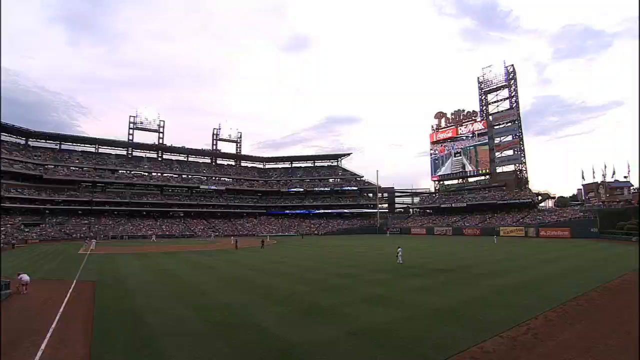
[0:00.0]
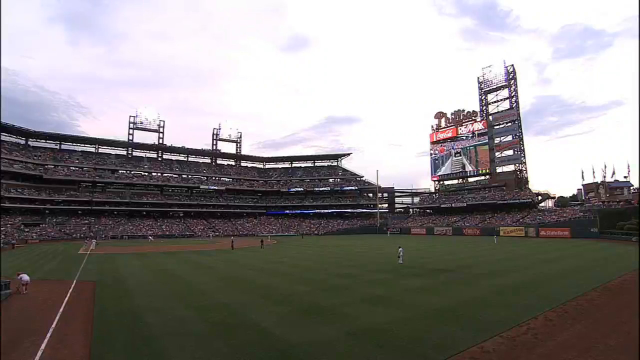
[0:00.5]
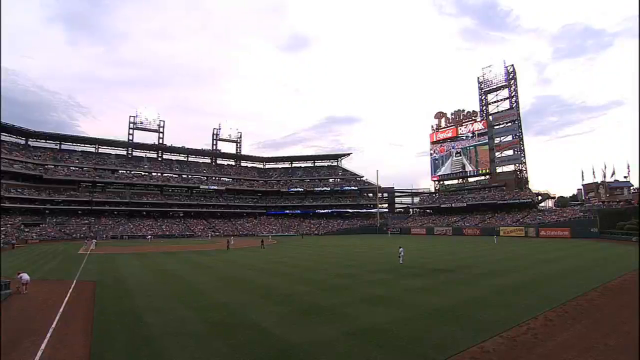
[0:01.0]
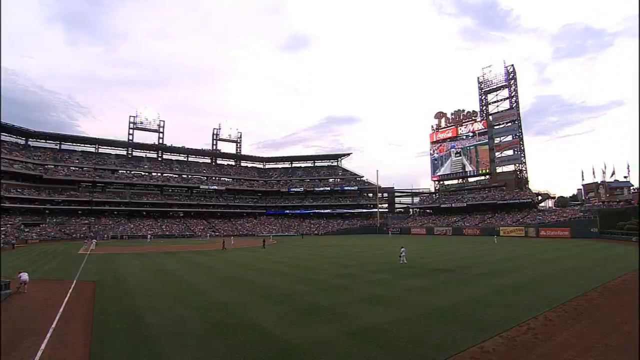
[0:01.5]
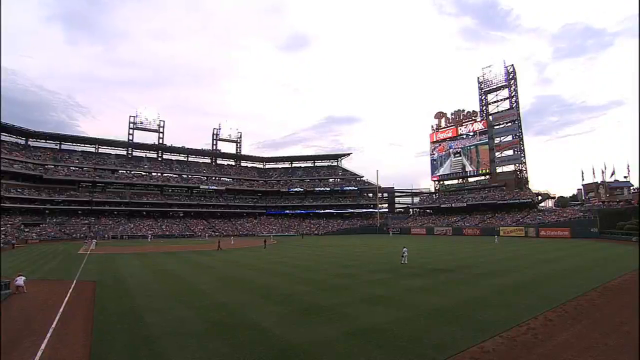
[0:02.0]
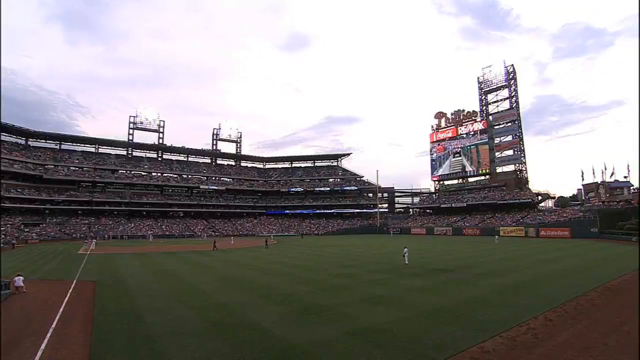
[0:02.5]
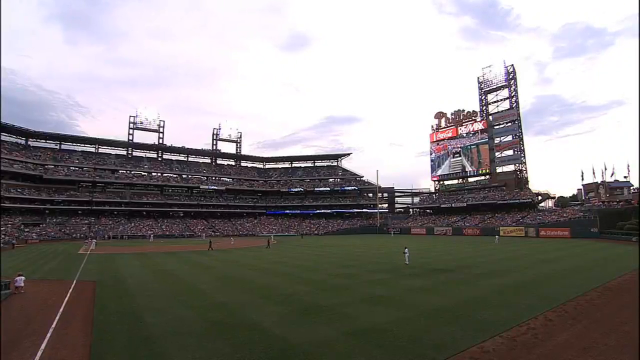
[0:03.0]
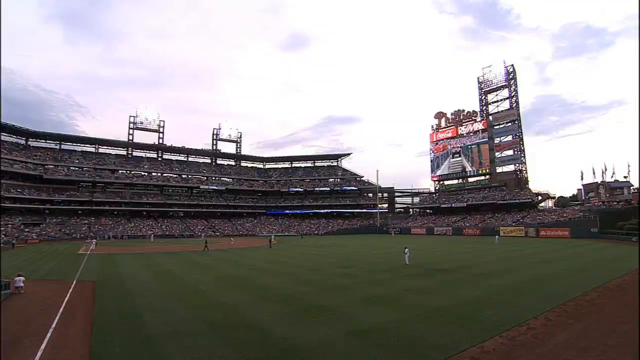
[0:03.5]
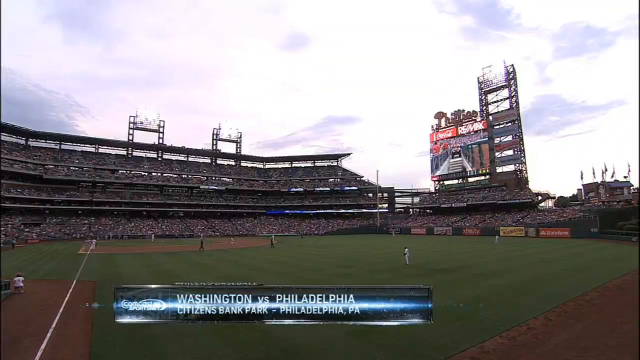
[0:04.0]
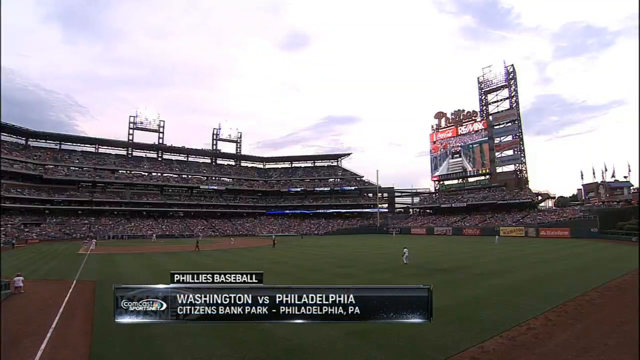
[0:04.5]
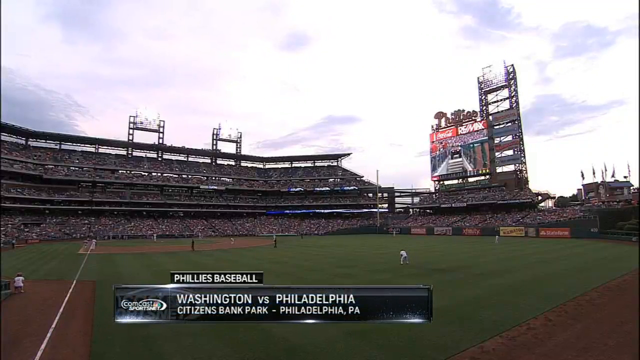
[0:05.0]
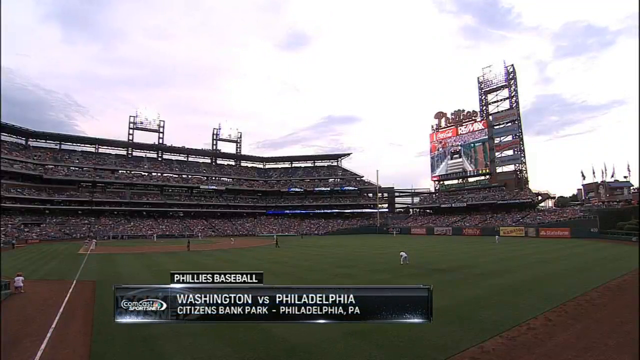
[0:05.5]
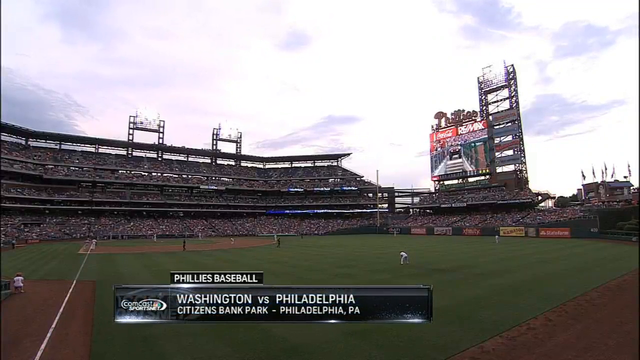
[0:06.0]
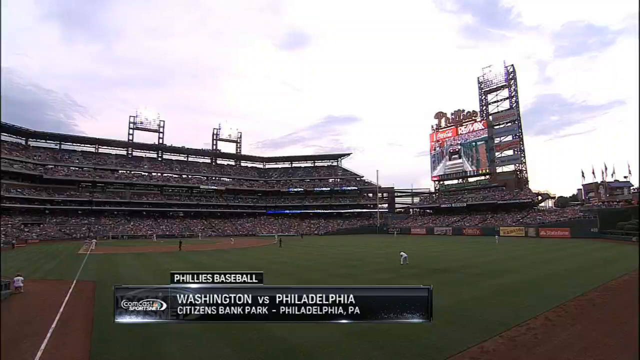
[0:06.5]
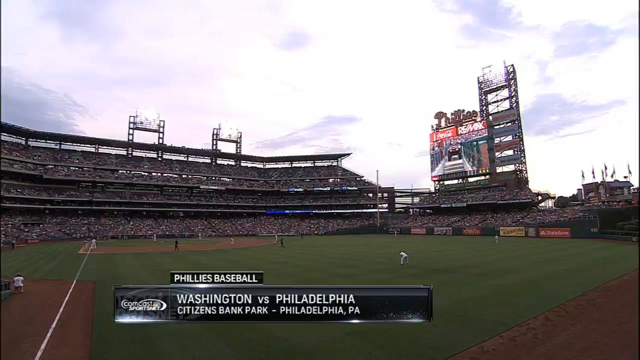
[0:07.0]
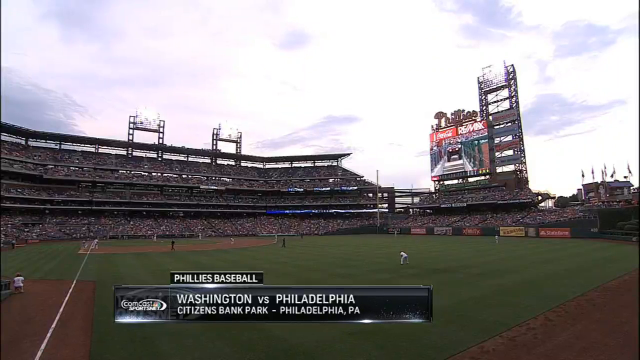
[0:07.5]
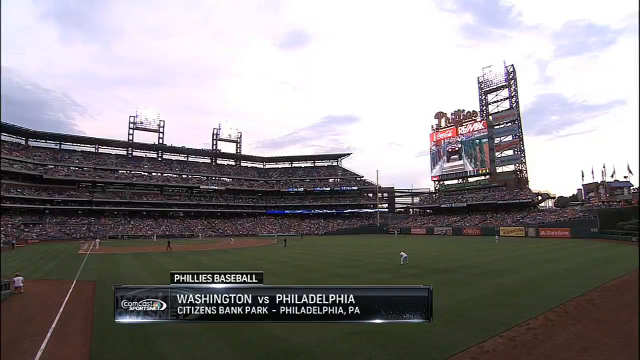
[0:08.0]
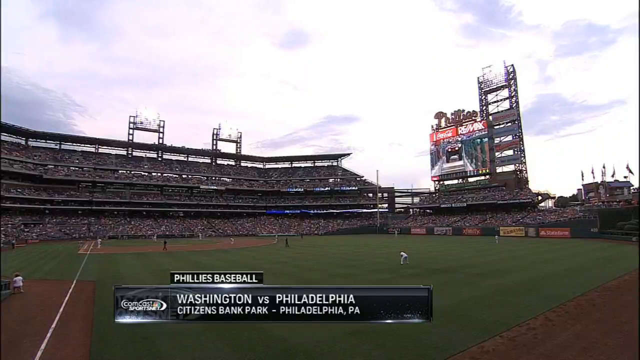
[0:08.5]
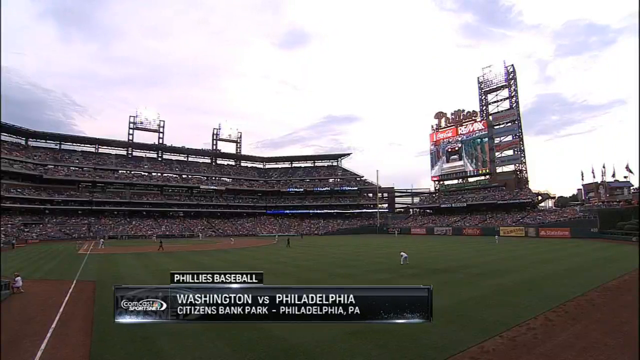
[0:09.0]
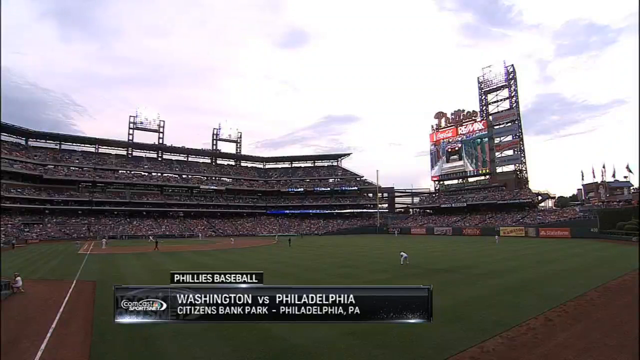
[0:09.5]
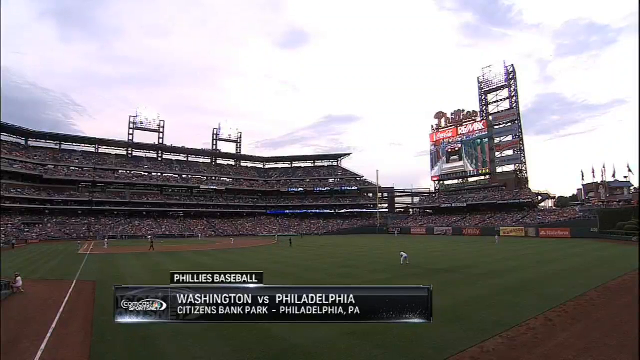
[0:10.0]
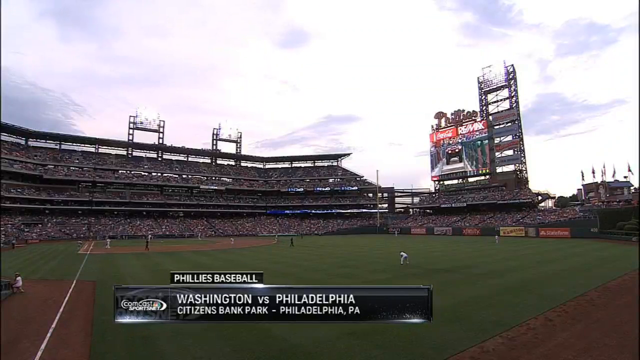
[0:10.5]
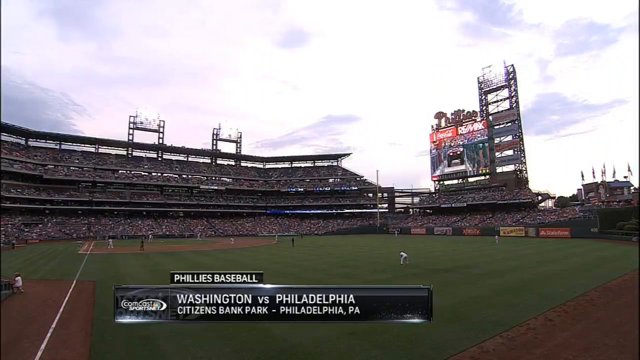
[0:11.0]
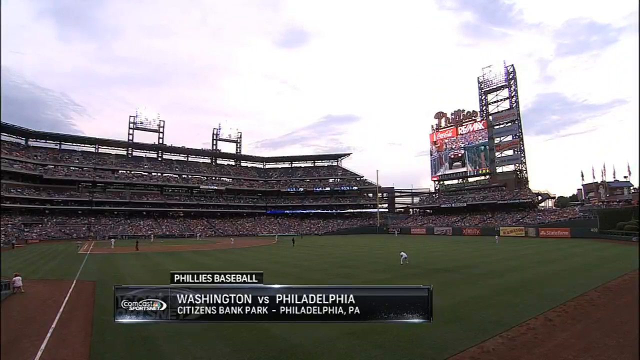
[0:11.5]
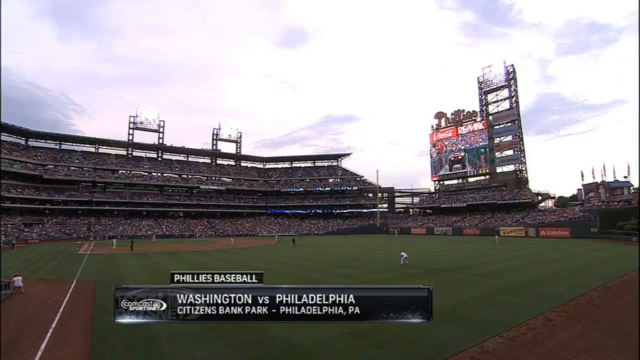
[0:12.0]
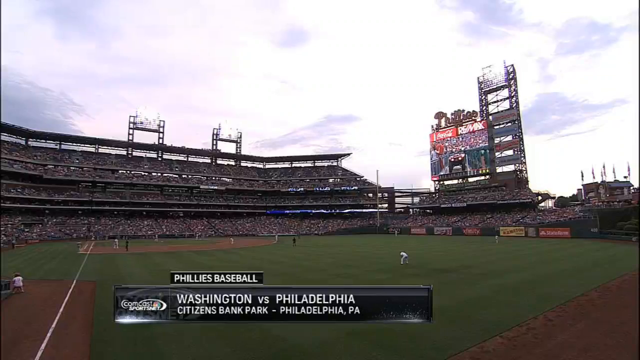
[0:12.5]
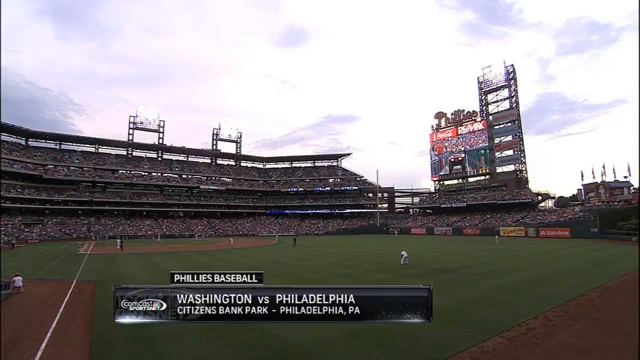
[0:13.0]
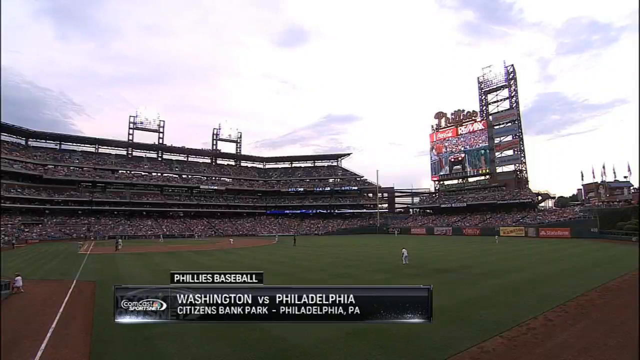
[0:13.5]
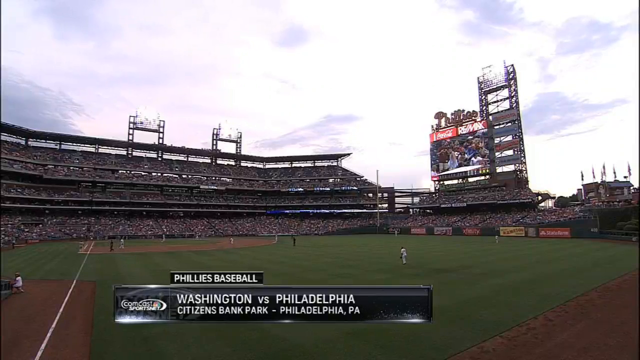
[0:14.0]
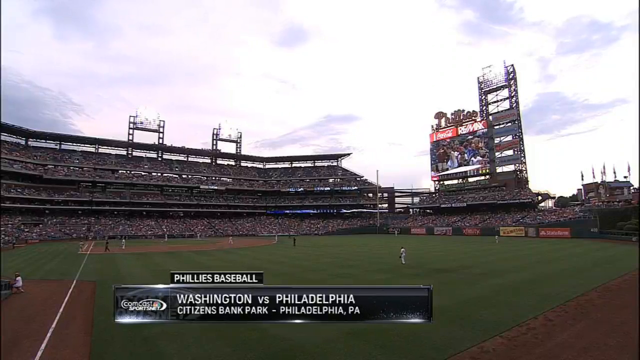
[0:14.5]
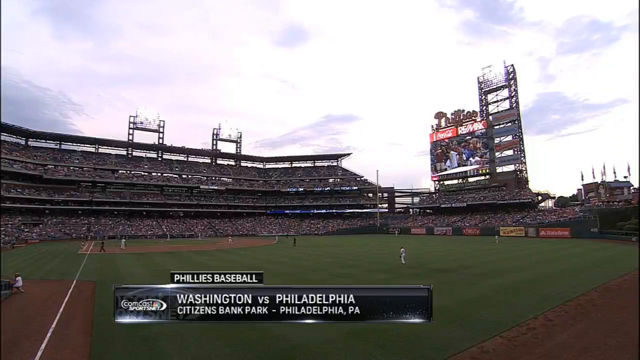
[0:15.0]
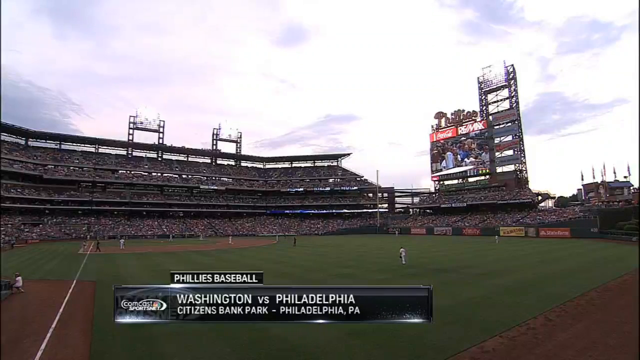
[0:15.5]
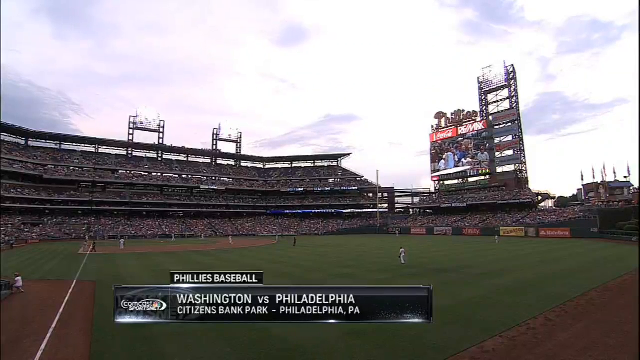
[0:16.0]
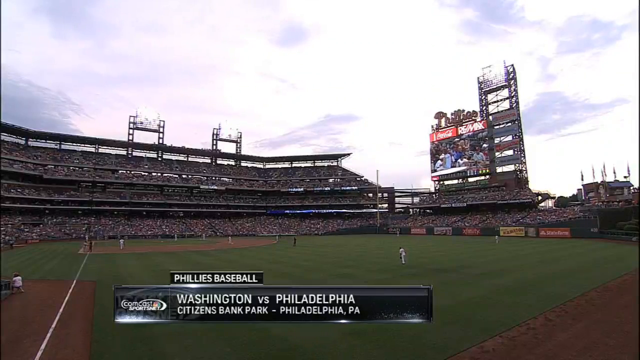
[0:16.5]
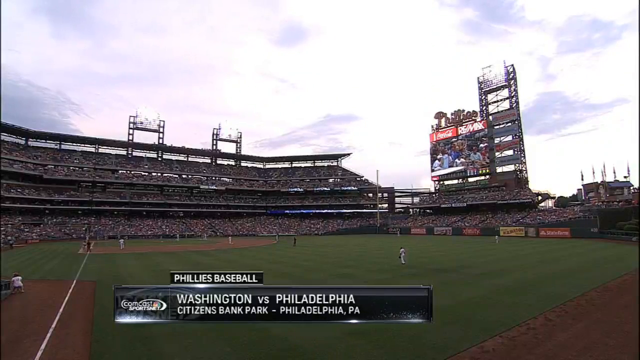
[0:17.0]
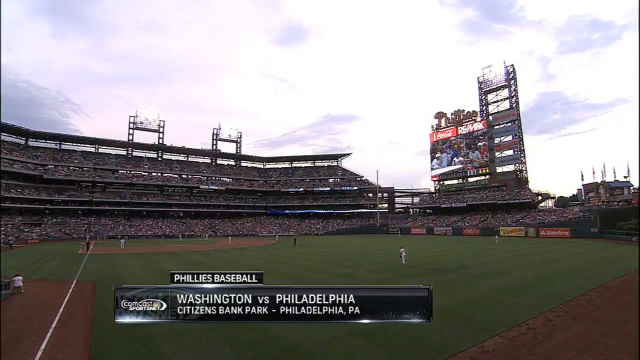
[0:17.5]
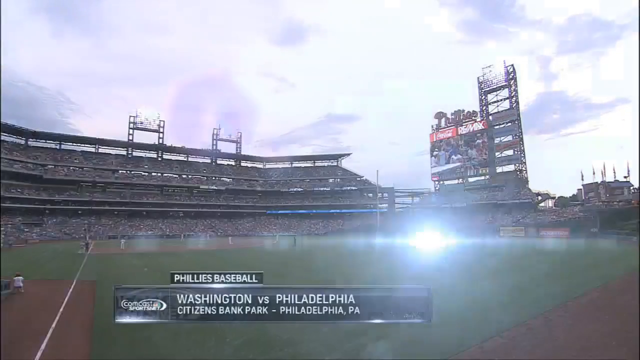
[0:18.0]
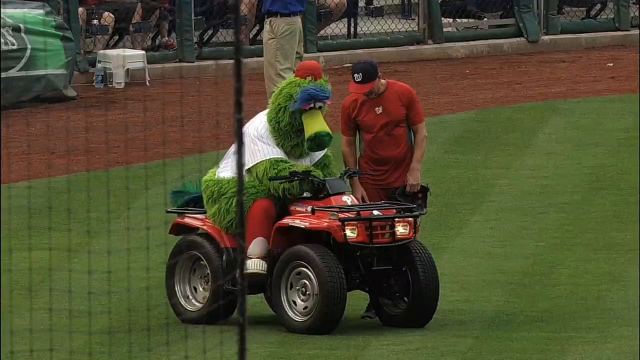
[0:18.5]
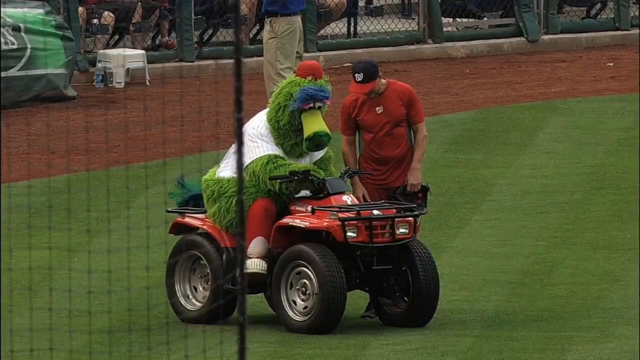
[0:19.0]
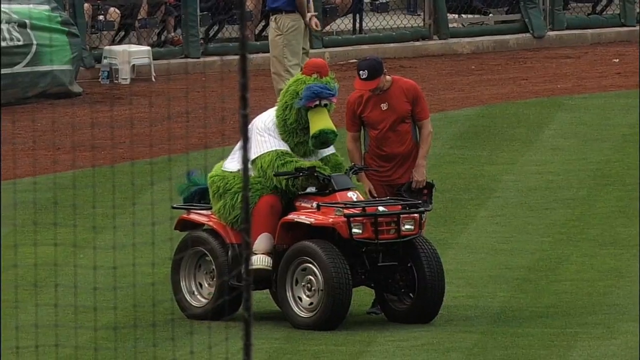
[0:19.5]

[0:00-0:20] The setting appears to be a baseball field: it is Washington vs. Philly at Citizens Bank Park in Philadelphia, Pennsylvania, so the Phillies are at home. Both teams appear to be out on the field. A marquee shows on the right-hand side of the screen. It looks like evening, almost nighttime, just about to get dark. A mascot, apparently the Phillies mascot, is green, blue and furry and is sitting in a red golf cart, something like an ATV. He is talking to someone while sitting in it and seems to be fixing something in the cart, with what looks like a staff member talking to him.